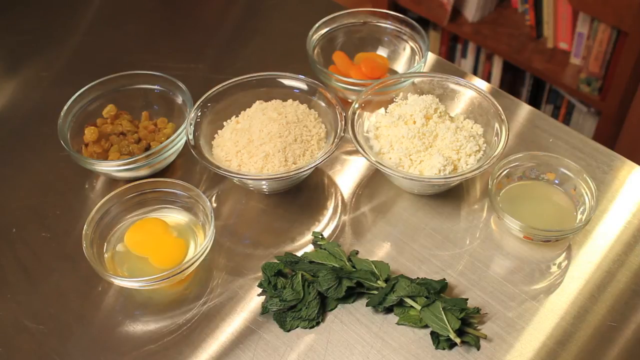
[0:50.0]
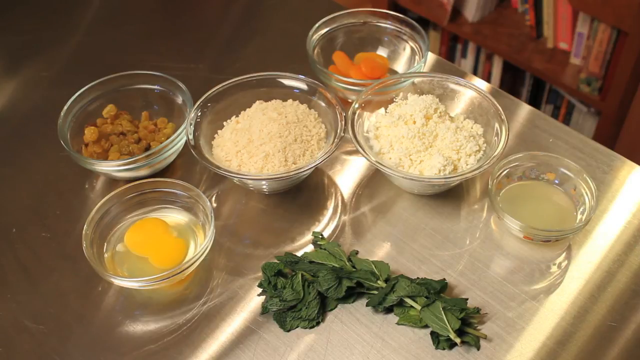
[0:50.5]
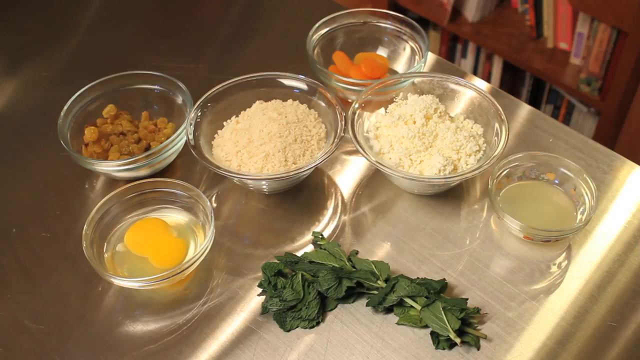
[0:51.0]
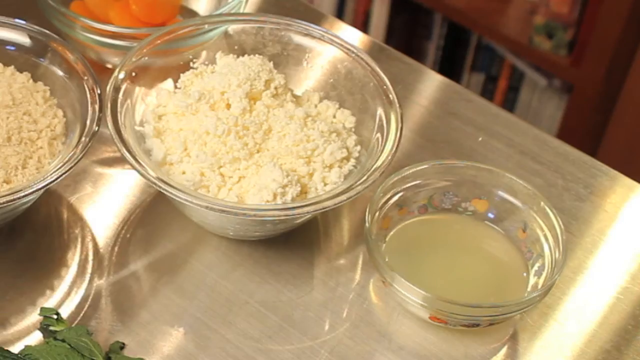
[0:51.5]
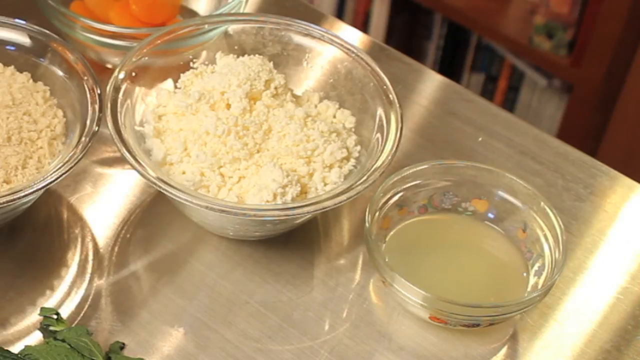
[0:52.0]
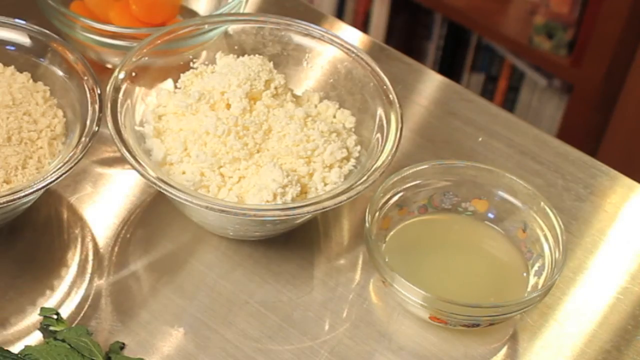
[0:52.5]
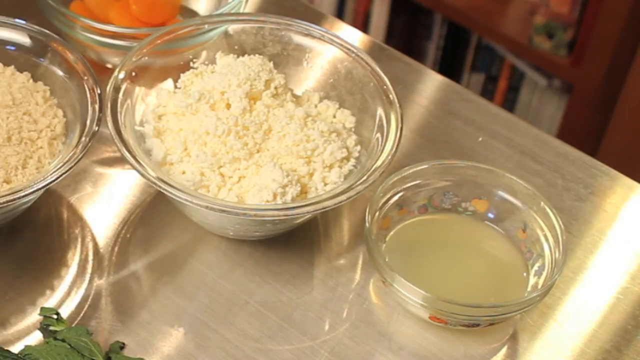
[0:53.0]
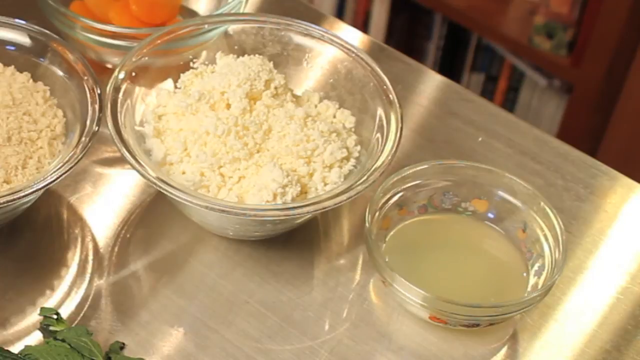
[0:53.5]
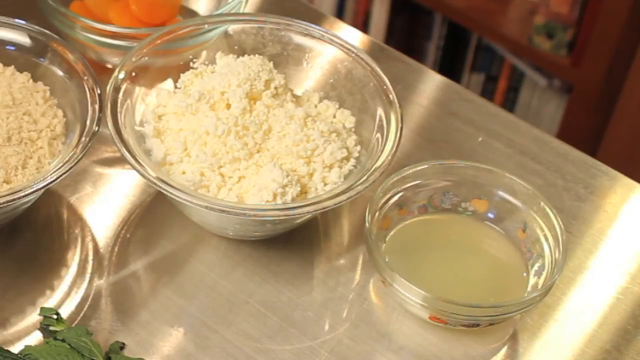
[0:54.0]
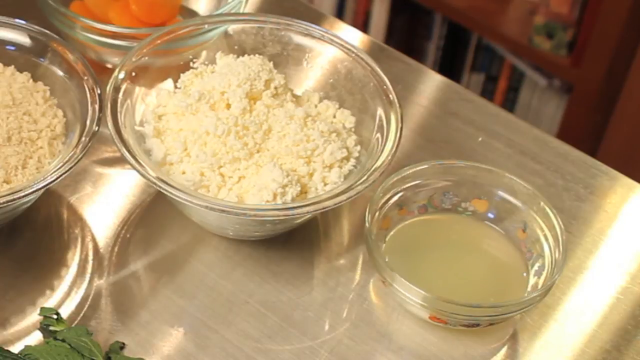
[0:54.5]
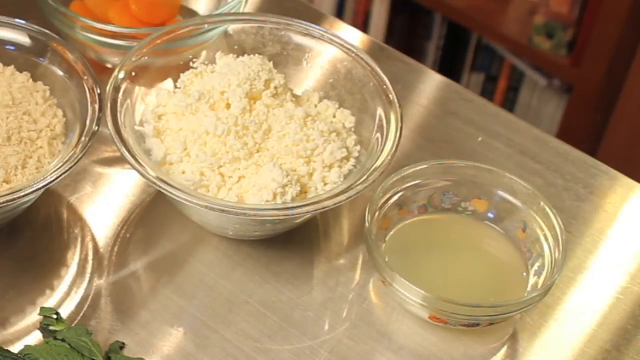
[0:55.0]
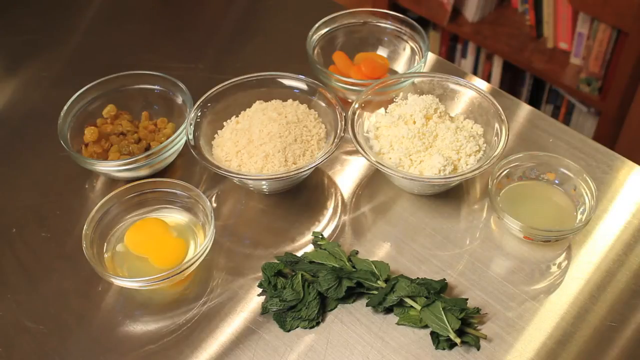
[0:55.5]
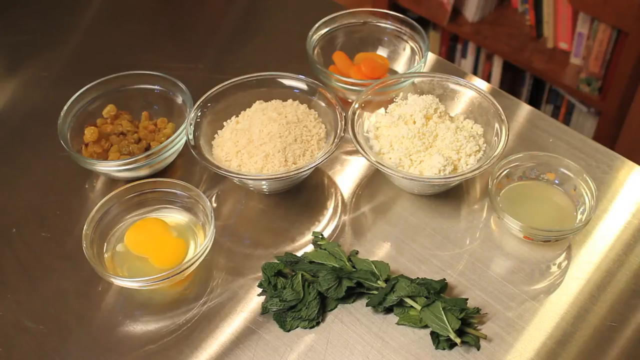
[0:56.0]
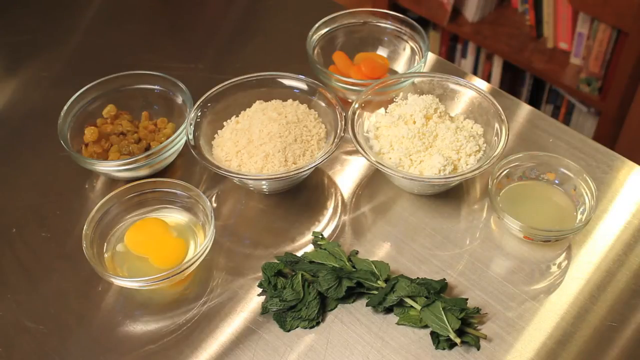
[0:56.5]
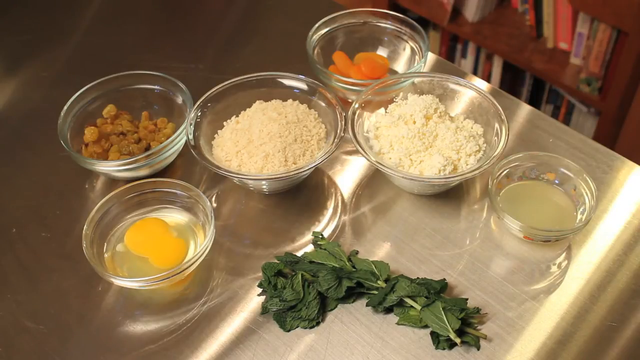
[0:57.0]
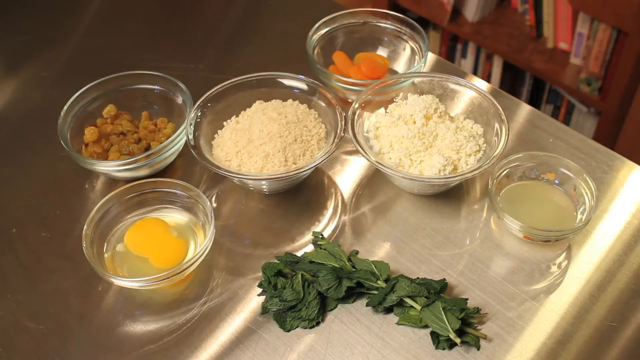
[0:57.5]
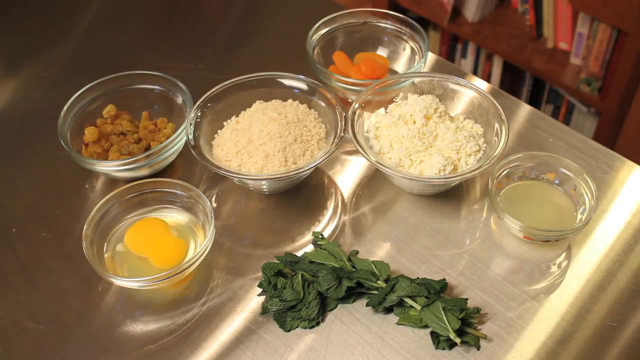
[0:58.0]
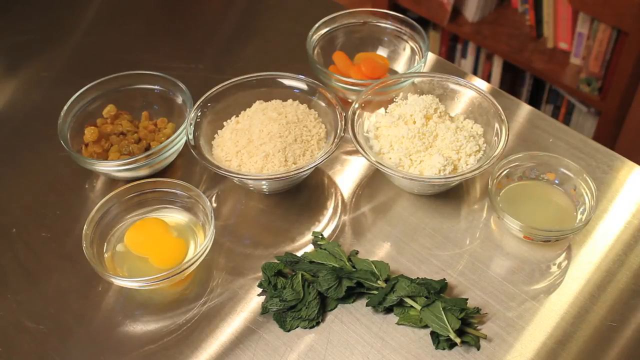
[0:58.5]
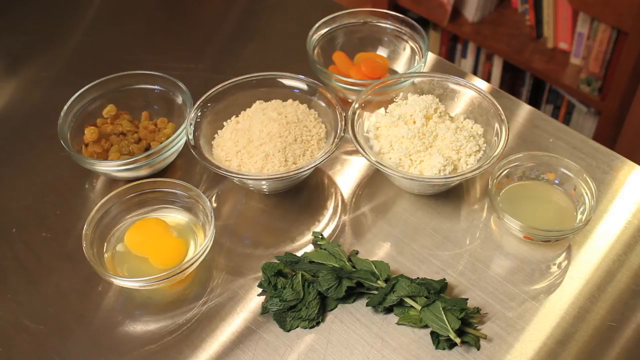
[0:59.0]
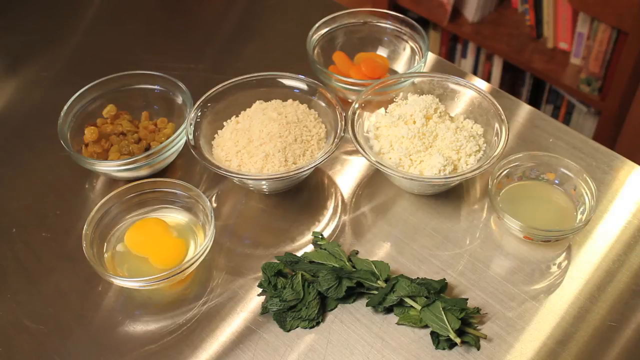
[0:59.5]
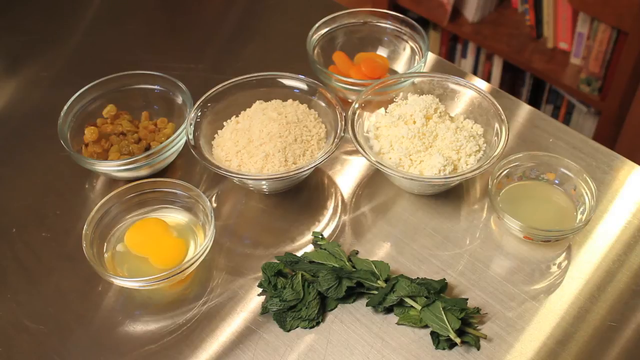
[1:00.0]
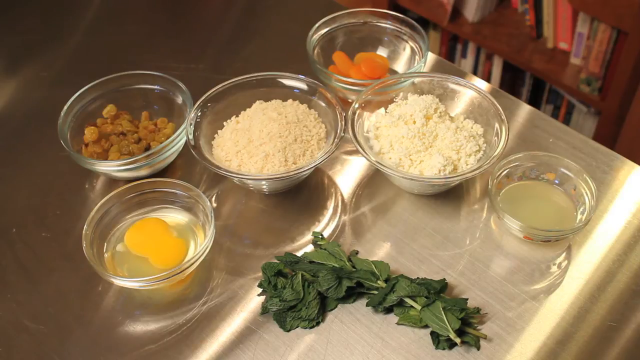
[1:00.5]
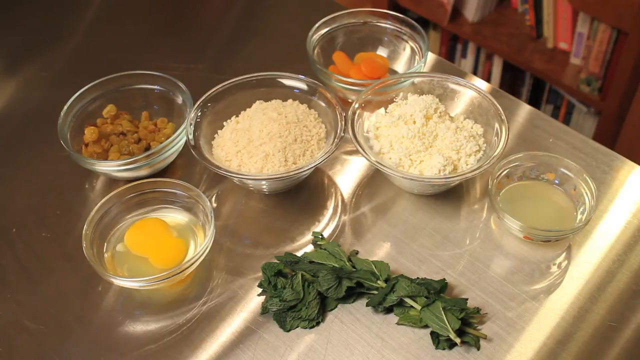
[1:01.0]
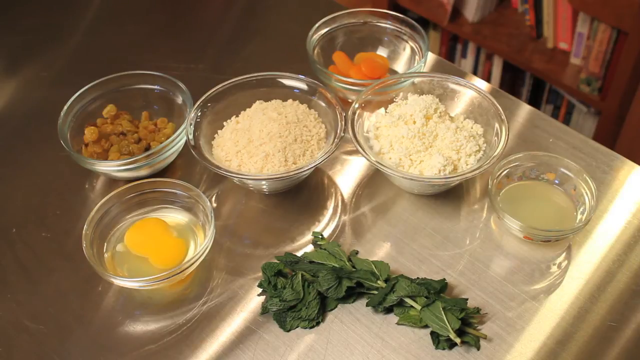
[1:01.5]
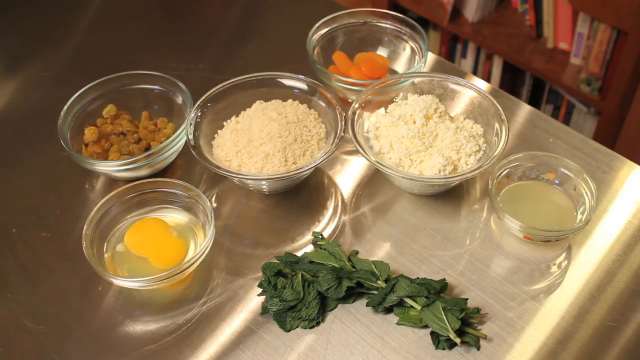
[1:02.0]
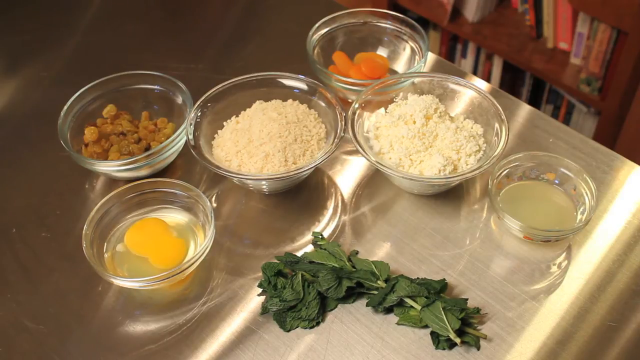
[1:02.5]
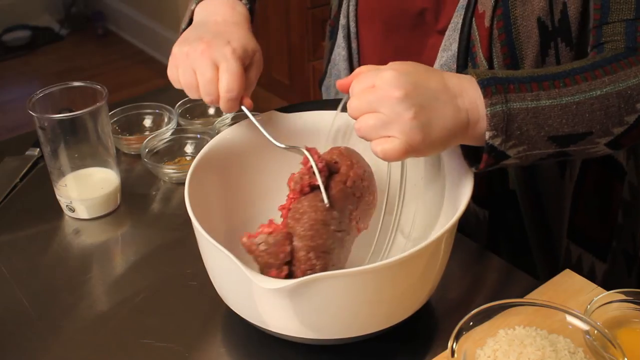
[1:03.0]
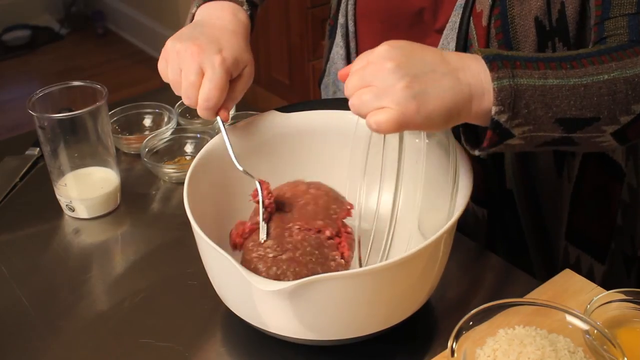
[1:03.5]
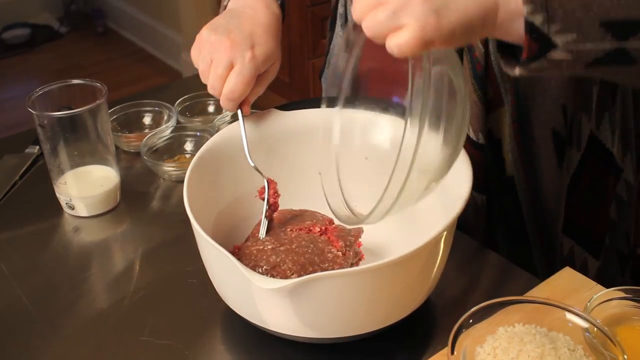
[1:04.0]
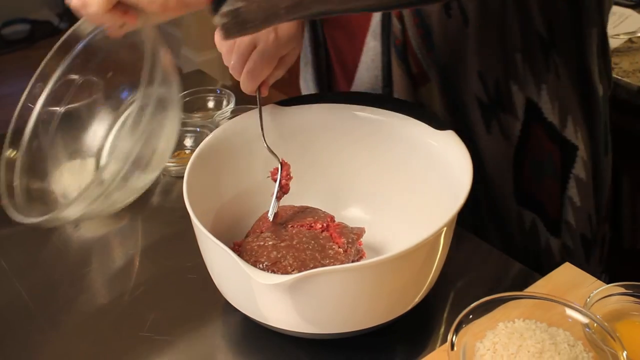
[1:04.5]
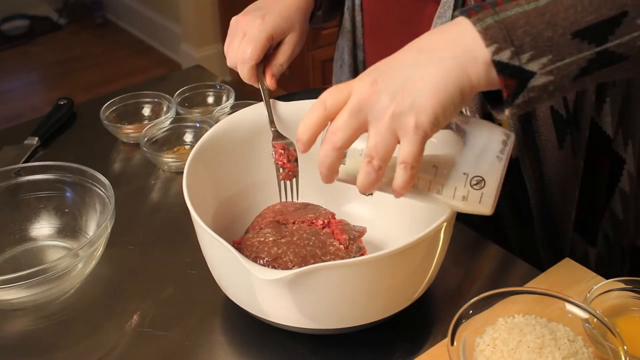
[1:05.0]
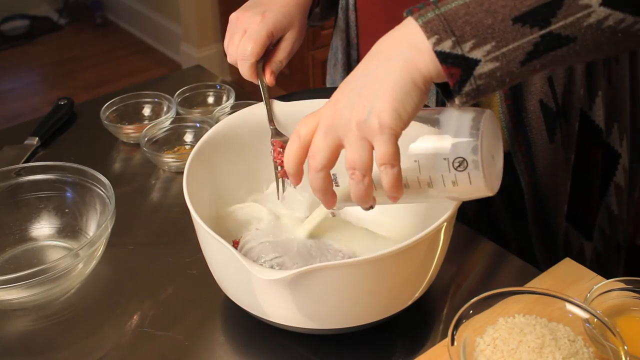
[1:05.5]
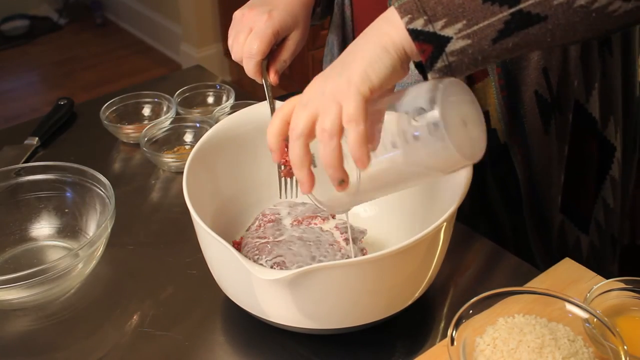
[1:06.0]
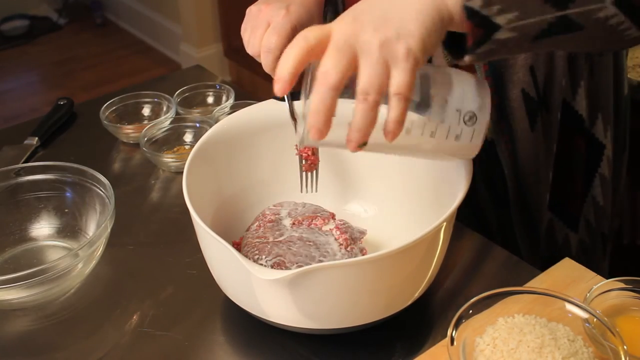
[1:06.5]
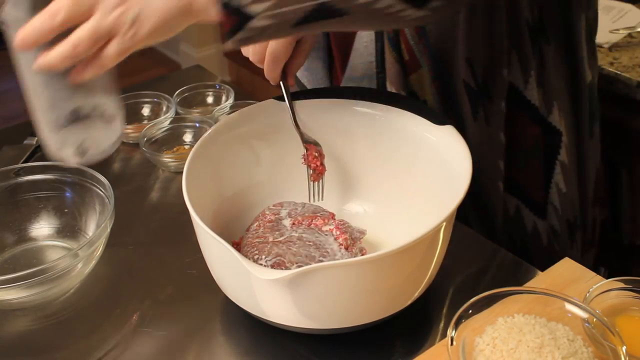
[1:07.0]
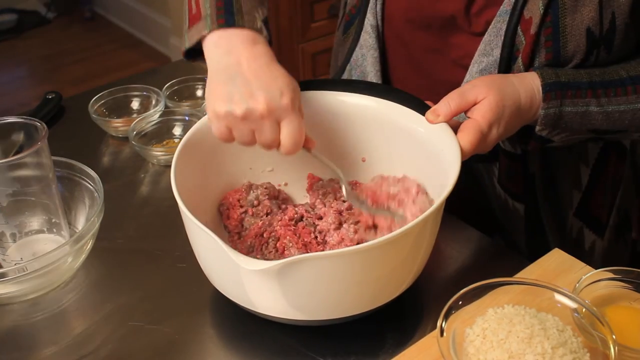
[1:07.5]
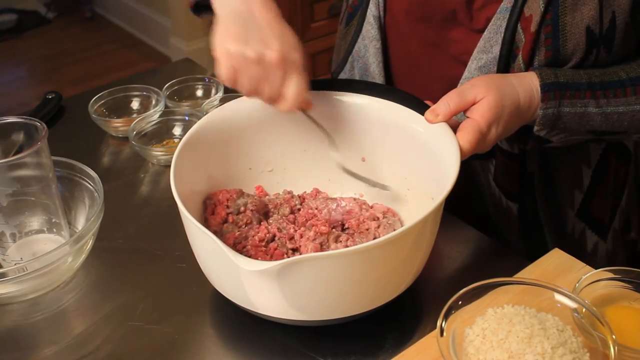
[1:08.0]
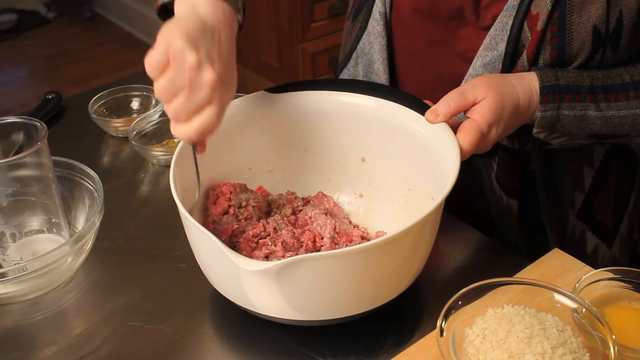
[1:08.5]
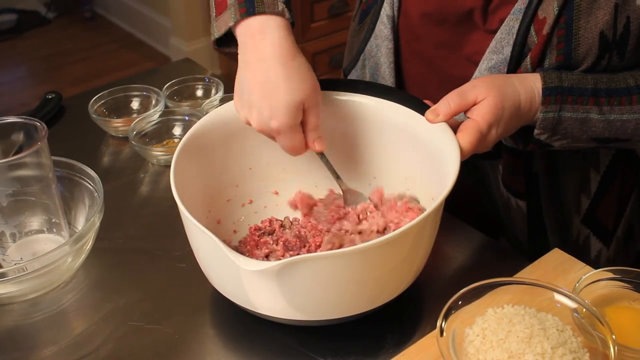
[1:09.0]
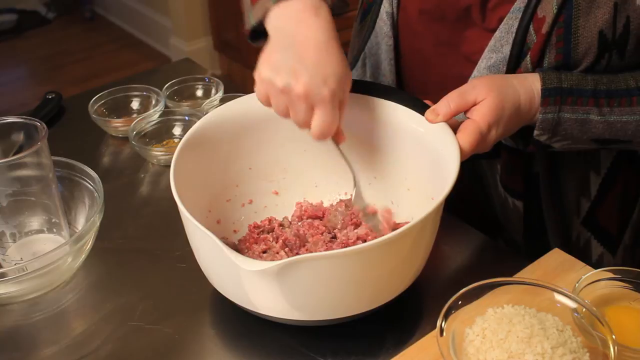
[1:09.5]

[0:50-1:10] Six small clear bowls are sitting on a stainless steel countertop. One appears to hold egg, one parmesan cheese, one melted butter, and one basil leaf. The others are uncertain: one looks like a powder with a crumbly consistency, one looks like some kind of nut, and one looks like very finely diced carrots. The camera zooms into several of the ingredients, including the one that looks like melted butter and the powdery one, then kind of zooms out to show them all and zooms in on another. The woman then pours the ground beef from the glass bowl into a large plastic bowl.